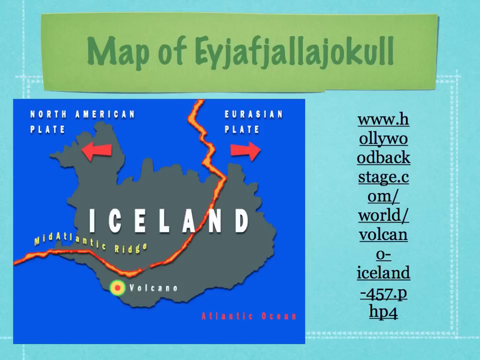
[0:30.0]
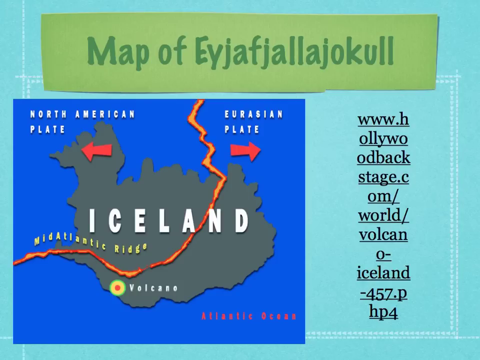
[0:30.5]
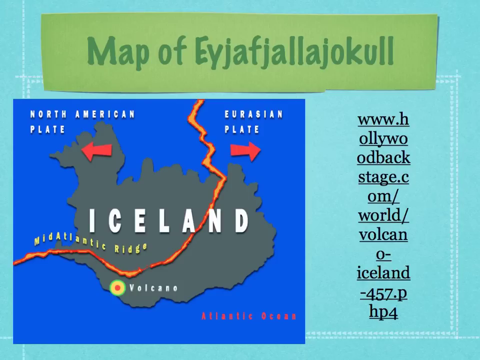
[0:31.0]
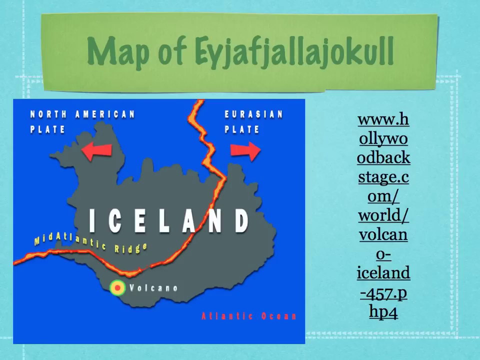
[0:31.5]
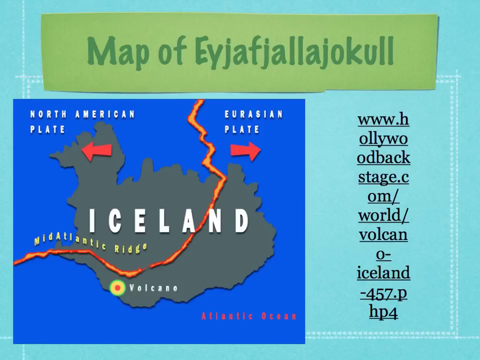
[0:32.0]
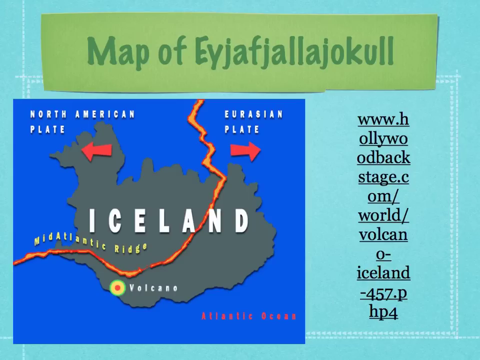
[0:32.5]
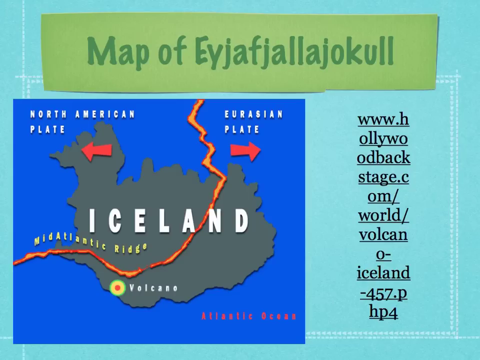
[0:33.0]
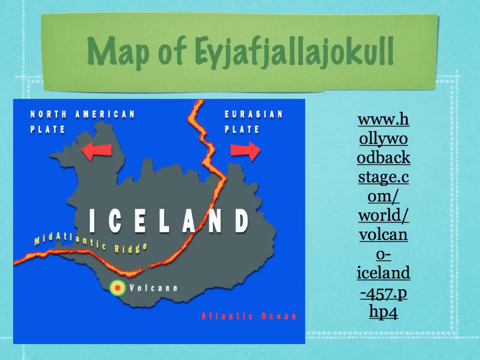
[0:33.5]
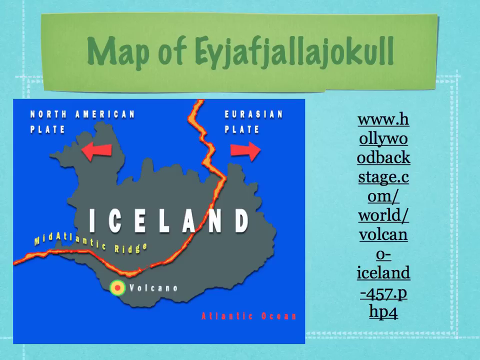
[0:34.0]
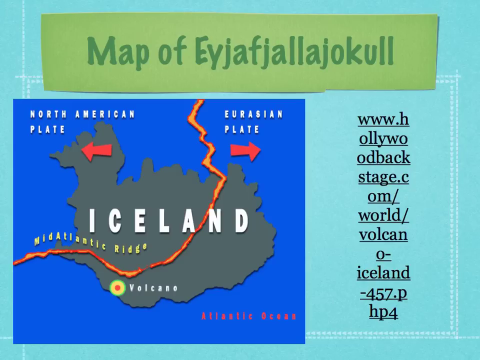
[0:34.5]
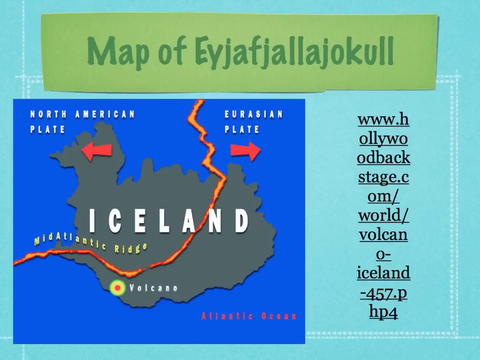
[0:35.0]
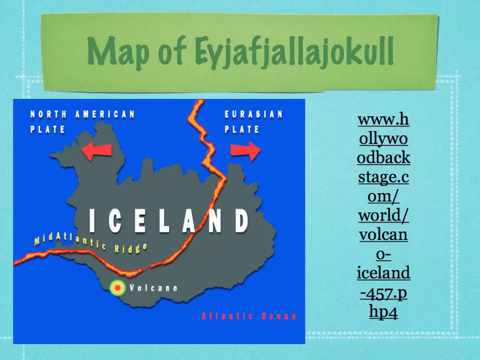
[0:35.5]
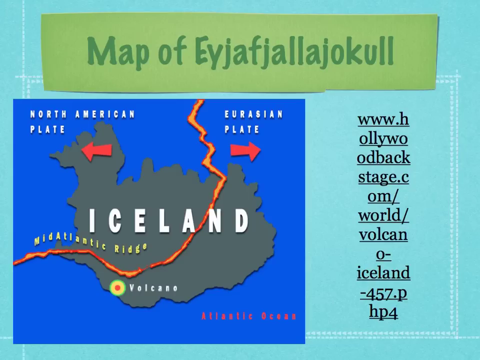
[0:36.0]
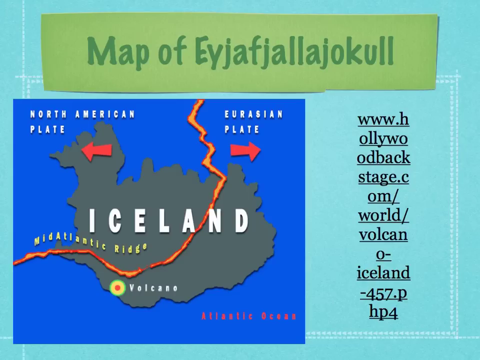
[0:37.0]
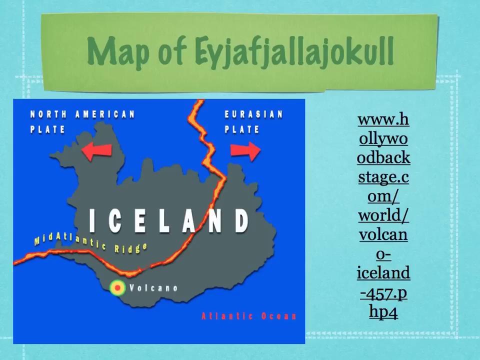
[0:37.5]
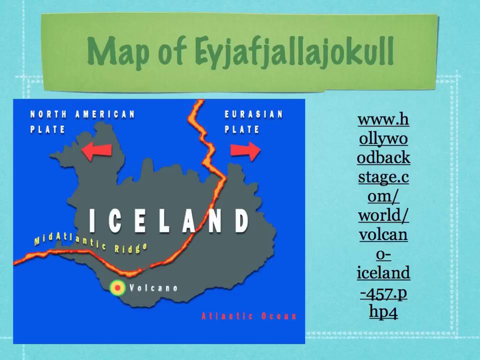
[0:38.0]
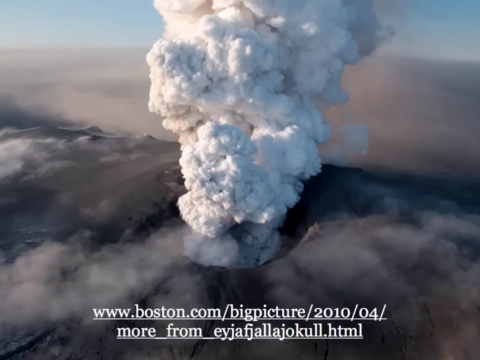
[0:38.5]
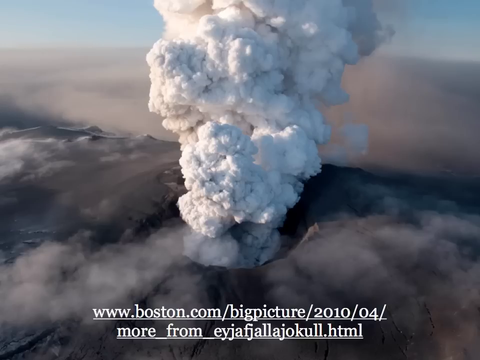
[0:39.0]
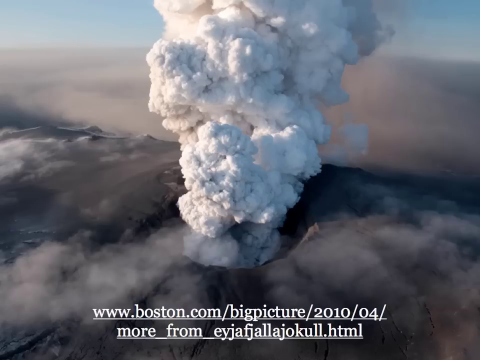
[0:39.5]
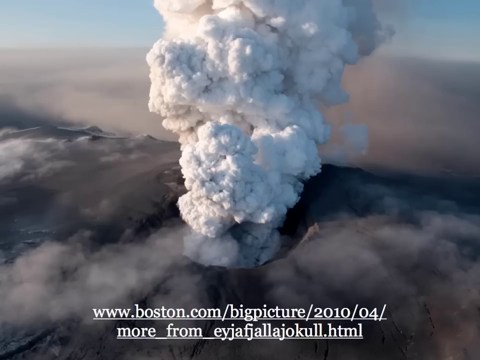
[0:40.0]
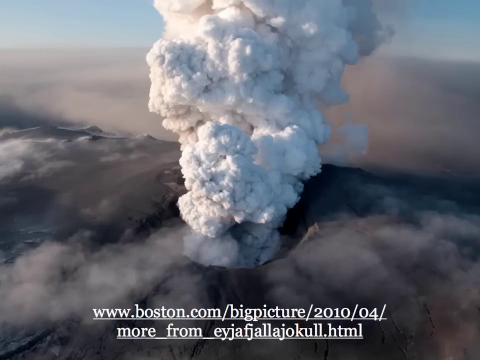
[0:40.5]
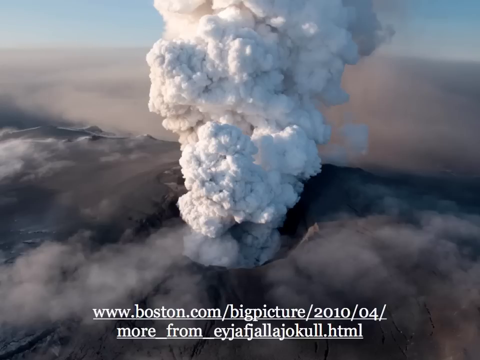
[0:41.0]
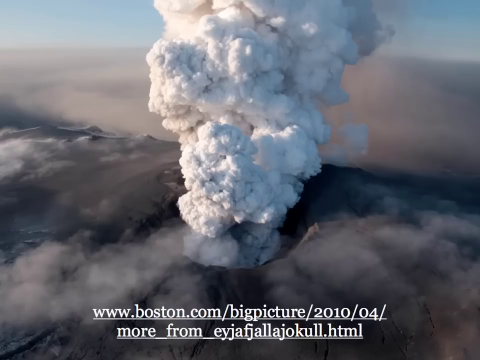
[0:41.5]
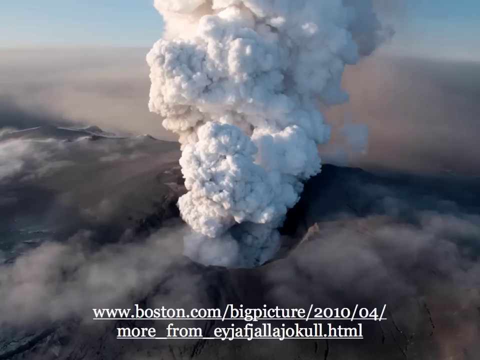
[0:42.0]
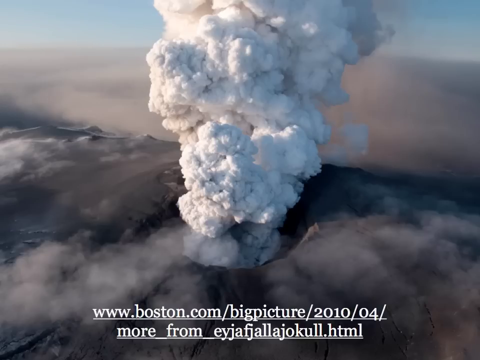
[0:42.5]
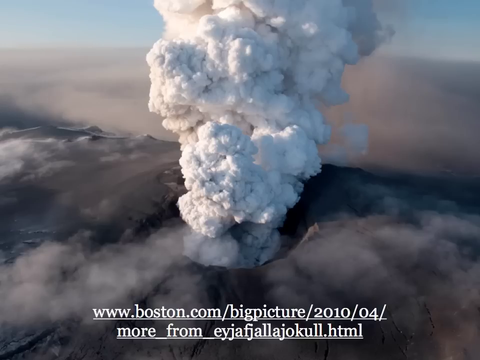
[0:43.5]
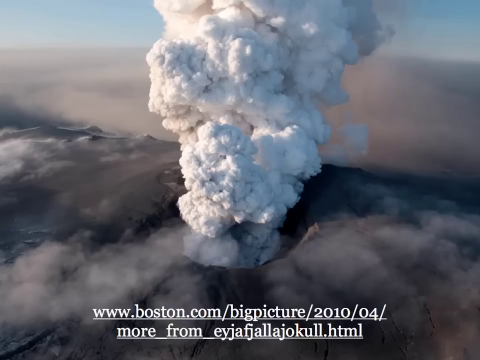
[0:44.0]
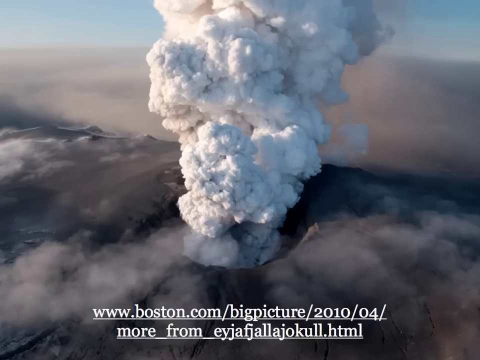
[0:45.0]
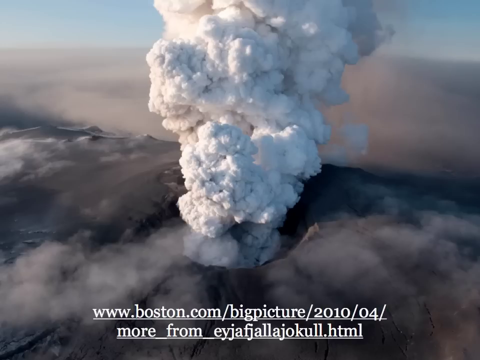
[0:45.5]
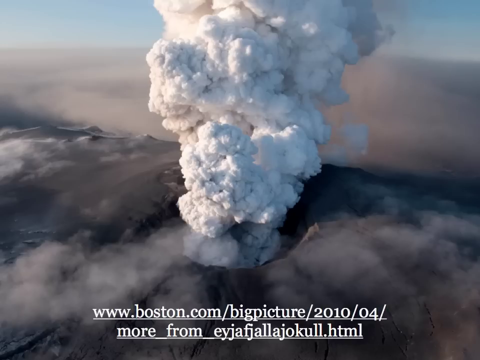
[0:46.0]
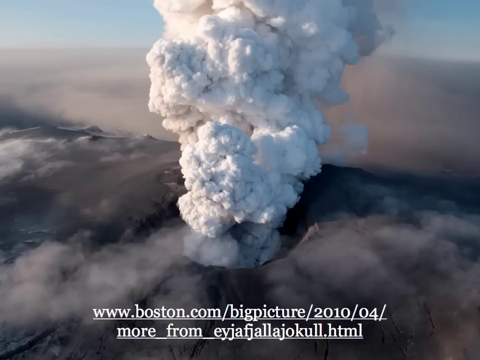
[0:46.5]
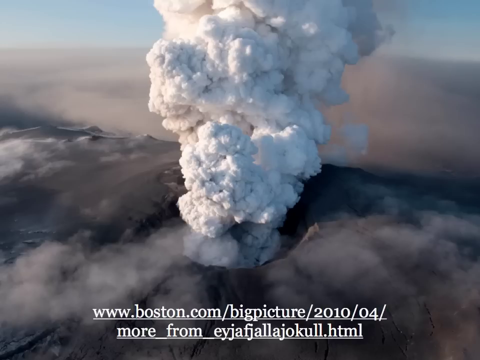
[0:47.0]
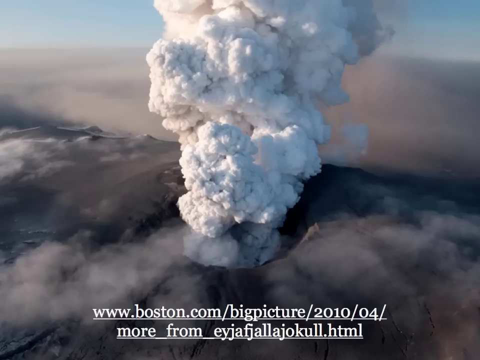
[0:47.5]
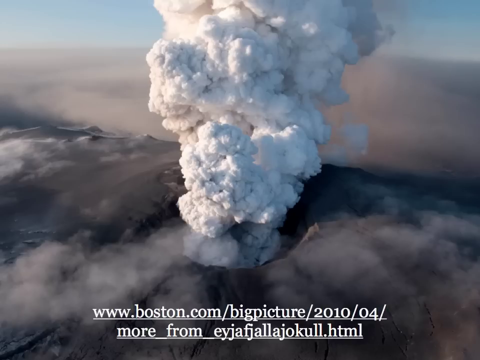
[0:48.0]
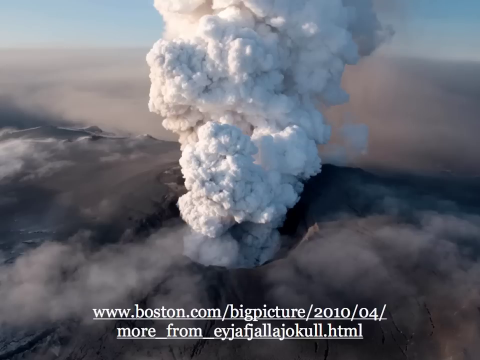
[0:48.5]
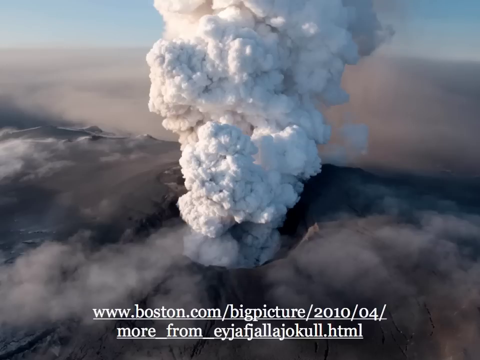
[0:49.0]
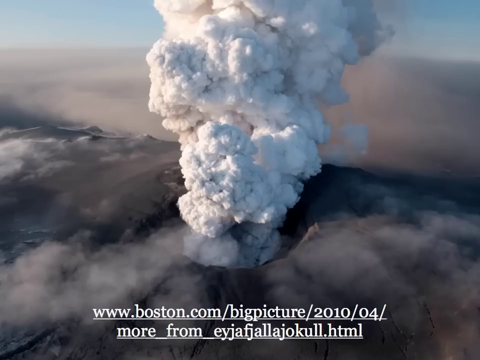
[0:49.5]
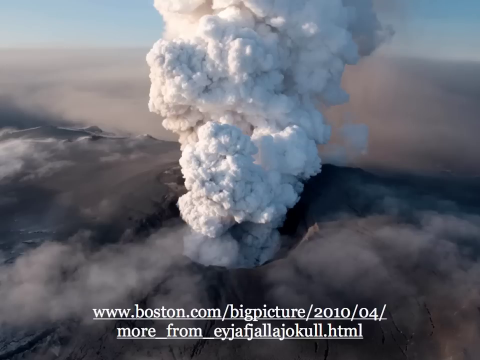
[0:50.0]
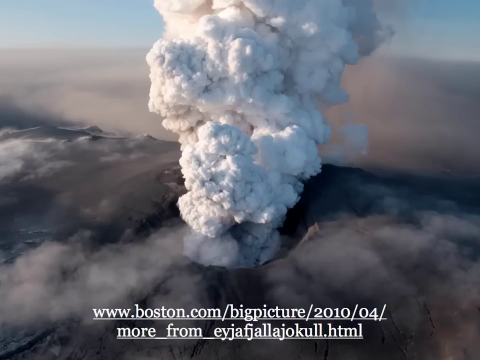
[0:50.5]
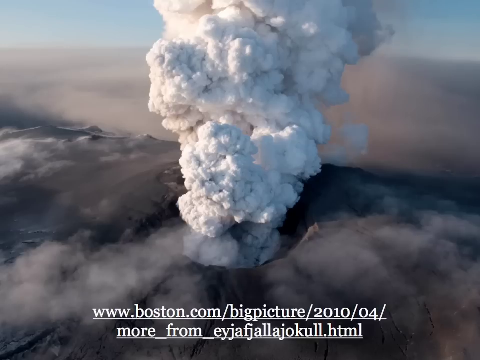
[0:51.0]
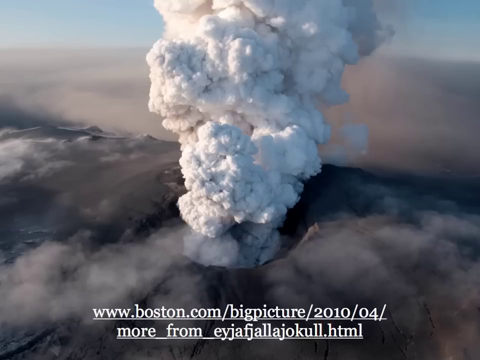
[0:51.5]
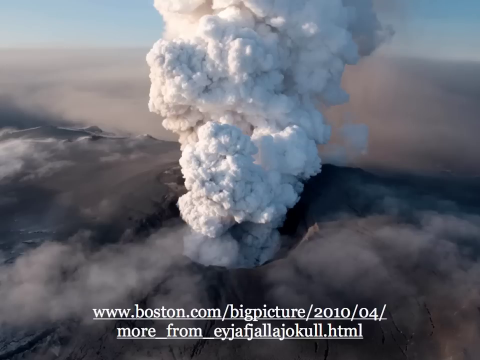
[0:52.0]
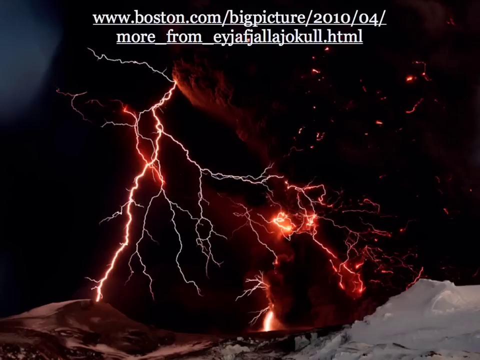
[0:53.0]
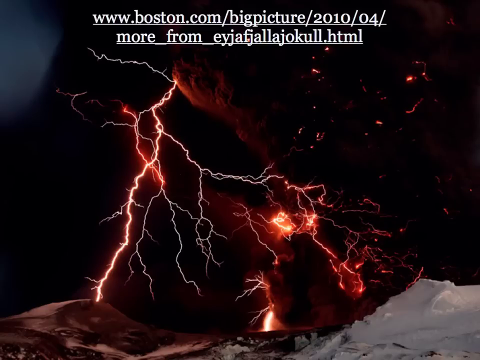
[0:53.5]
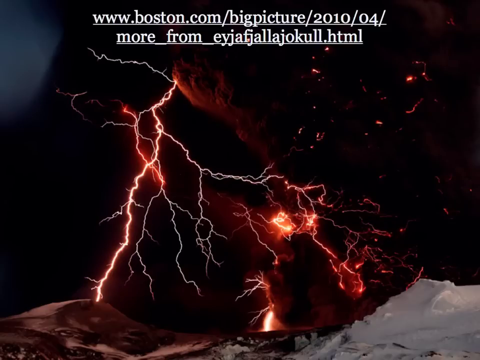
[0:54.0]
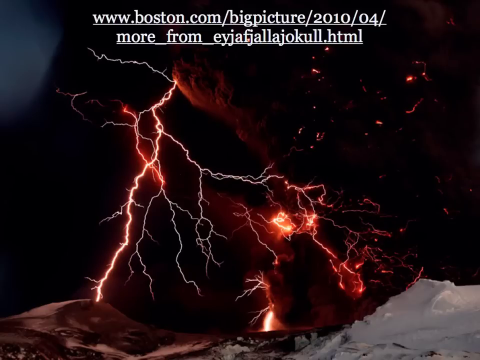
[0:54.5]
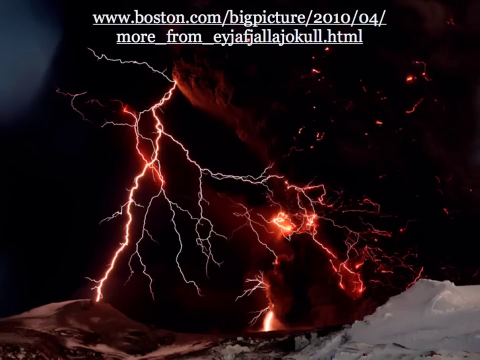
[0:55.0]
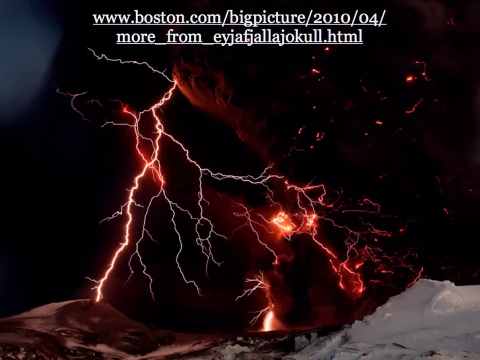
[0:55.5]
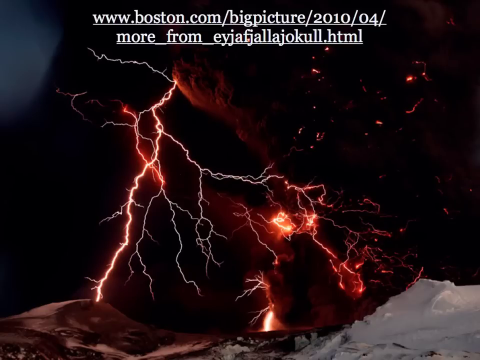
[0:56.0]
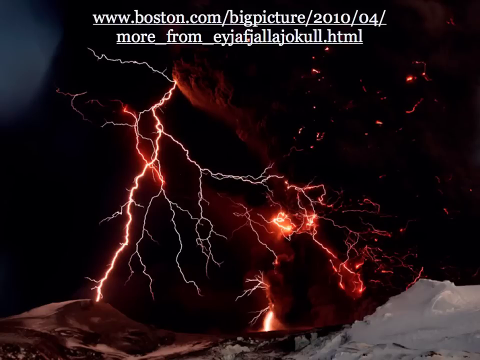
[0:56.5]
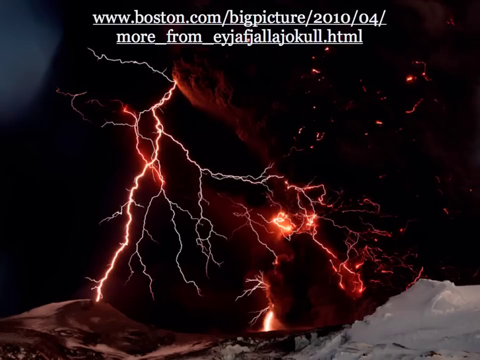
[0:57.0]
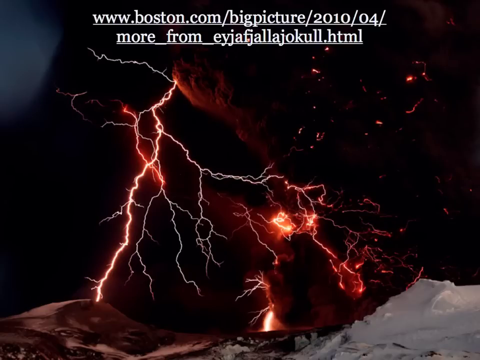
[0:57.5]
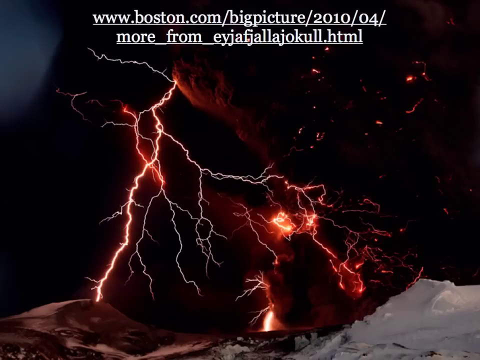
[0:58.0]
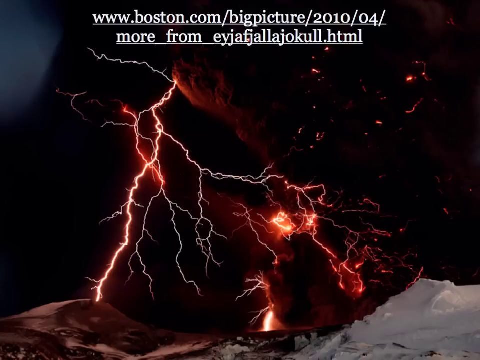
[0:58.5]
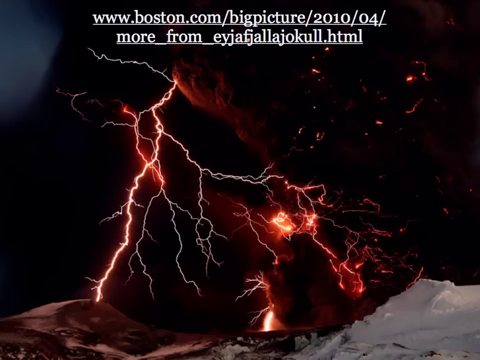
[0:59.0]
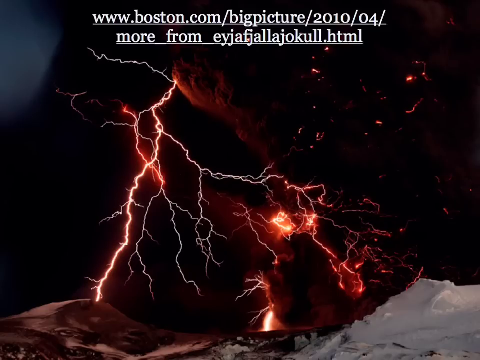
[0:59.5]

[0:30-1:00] A slide shows an unevenly cut green banner, like a jaggedly cut piece of paper, at the top, with green text reading "Map of Eyjafjallajokull". Below it on the left is a deep blue square background with a light black shape of a continent or country labeled "Iceland" in white text. A jagged orange line goes through it, and yellow text above it reads "Mid-Atlantic Ridge". Near the top of the square, a red arrow points to the left and another red arrow points to the right. By the left arrow, white text reads "North American Plate"; above the right arrow, white text reads "Eurasian Plate". At the bottom of Iceland is a multicolored circle with red at the center, then yellow, then green, labeled "Volcano" in white text. The next slide shows an image of a volcano, with big, deep, billowing white clouds coming out of a hole in the ground or in a mountain. White clouds, fog or steam are above black rocks or a dark surface. At the very bottom is a citation for where the image presumably was sourced. The slide then switches to orange arcing lines coming from the middle left side of the image near the top and going downward in multiple directions, spidering out, some deeper red and some lighter. There are rocks around it, and it is unclear whether it is lightning or a lava flow. At the very top is white text with a citation for the image.